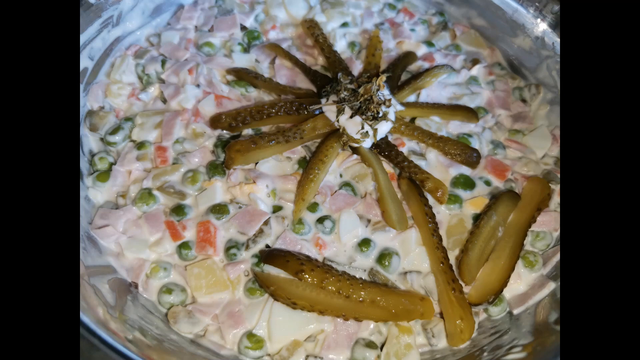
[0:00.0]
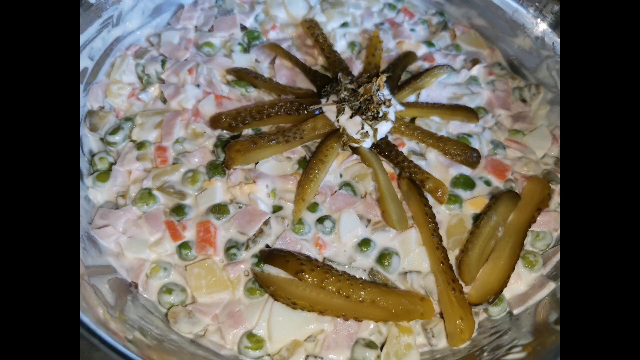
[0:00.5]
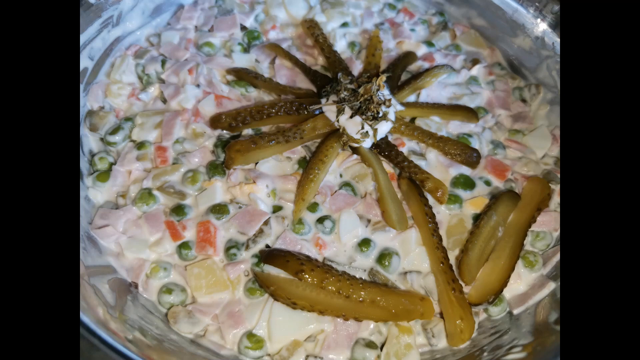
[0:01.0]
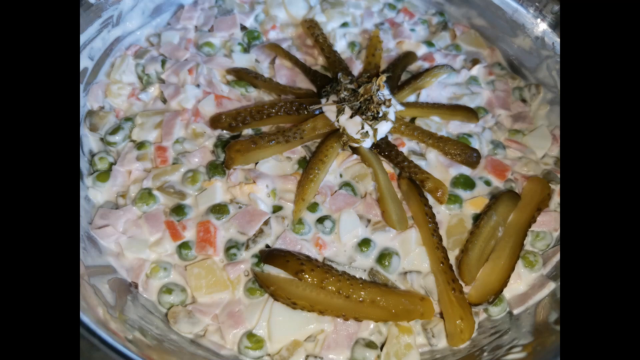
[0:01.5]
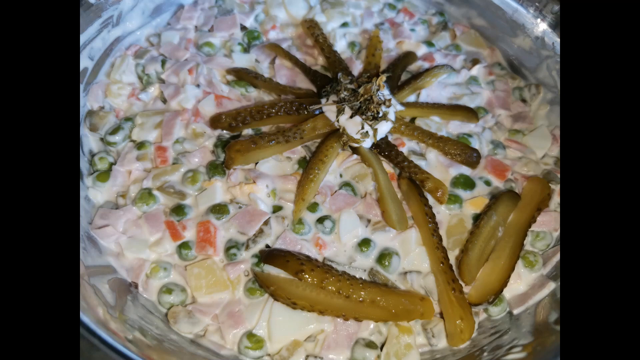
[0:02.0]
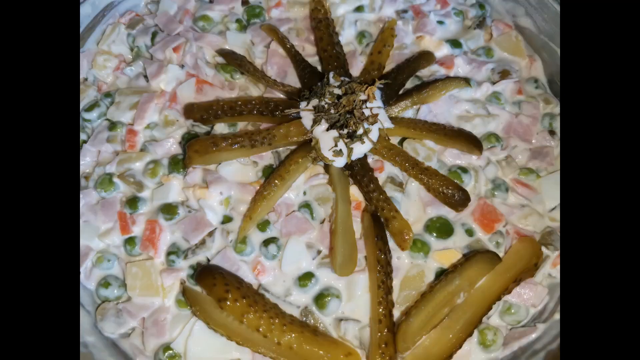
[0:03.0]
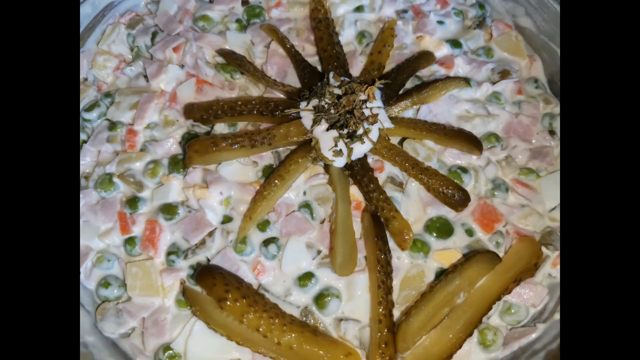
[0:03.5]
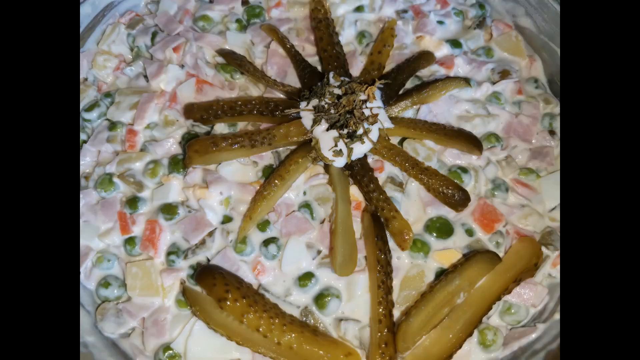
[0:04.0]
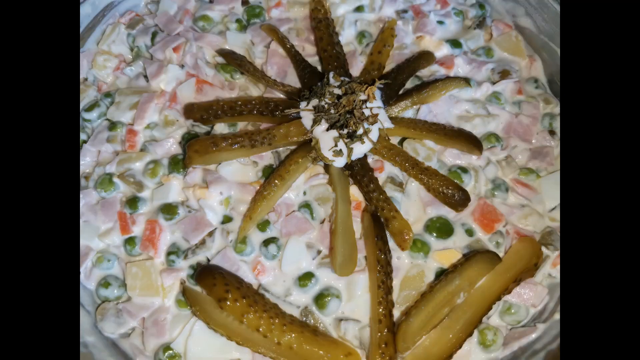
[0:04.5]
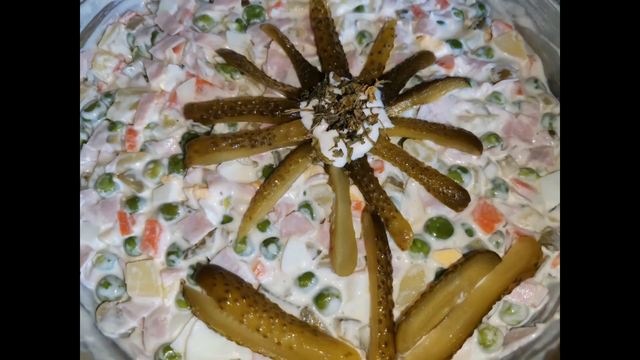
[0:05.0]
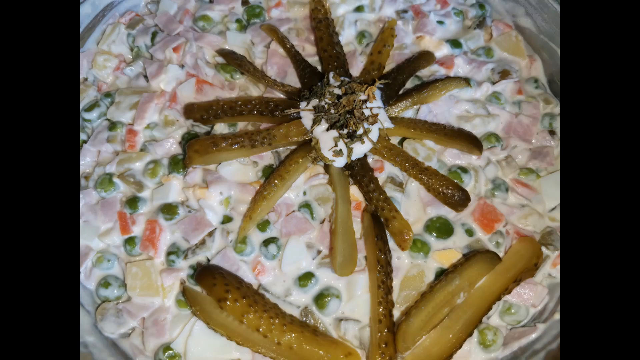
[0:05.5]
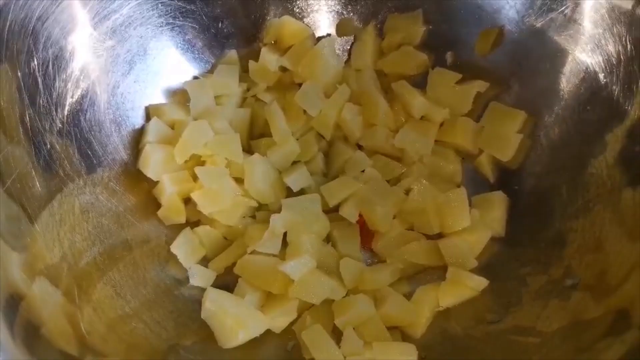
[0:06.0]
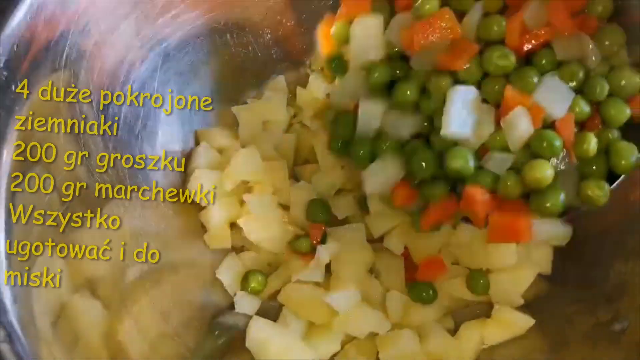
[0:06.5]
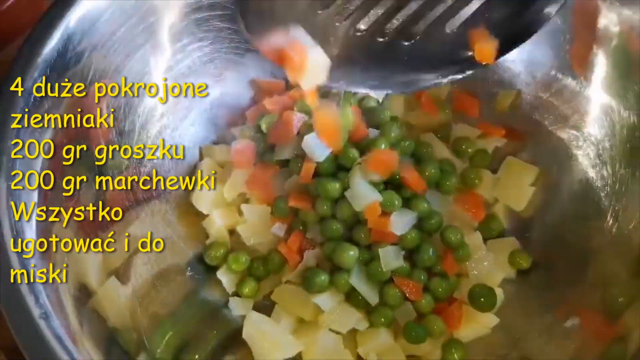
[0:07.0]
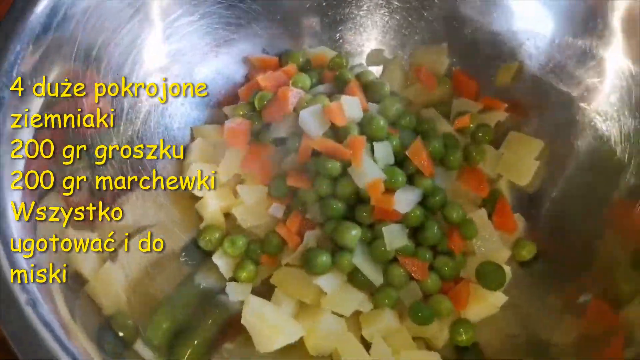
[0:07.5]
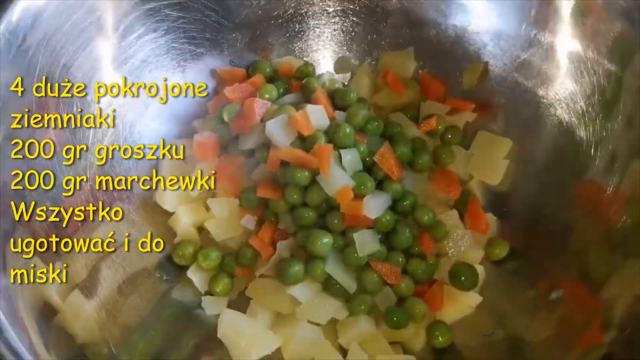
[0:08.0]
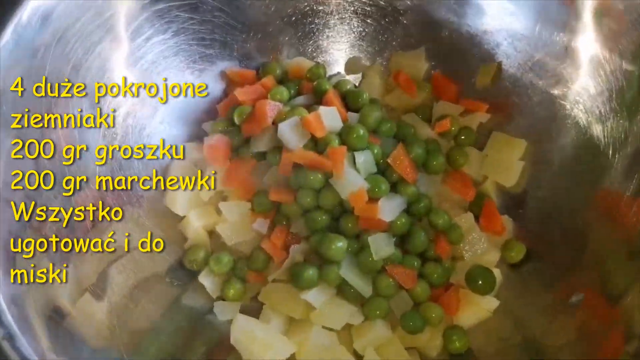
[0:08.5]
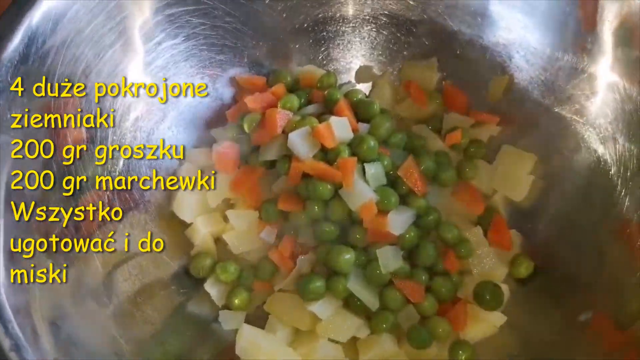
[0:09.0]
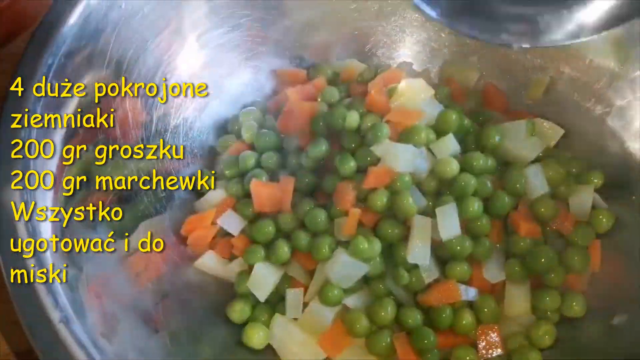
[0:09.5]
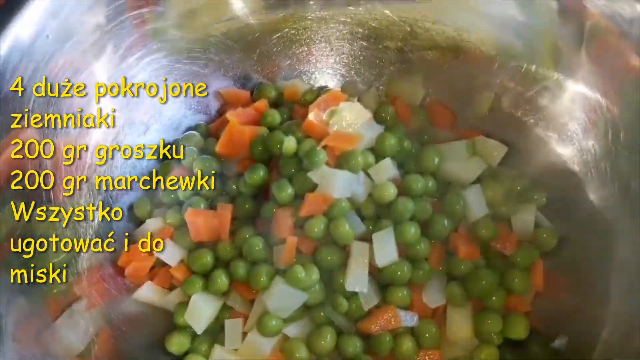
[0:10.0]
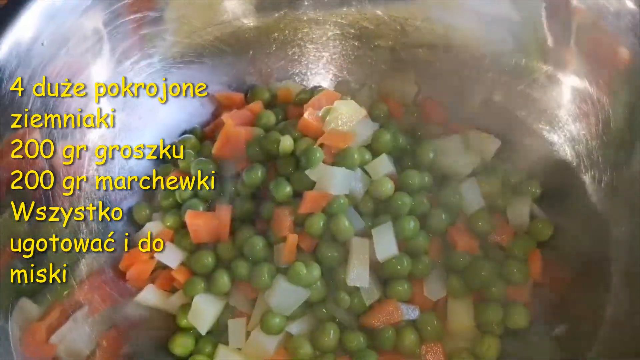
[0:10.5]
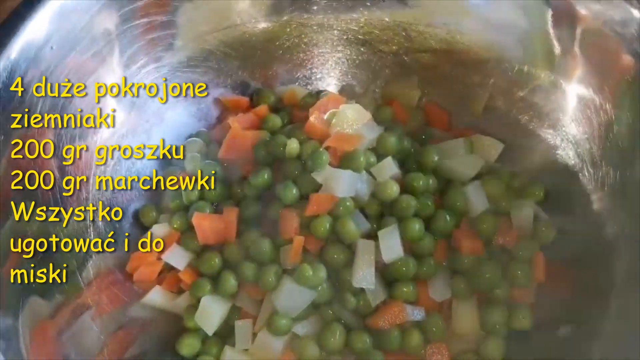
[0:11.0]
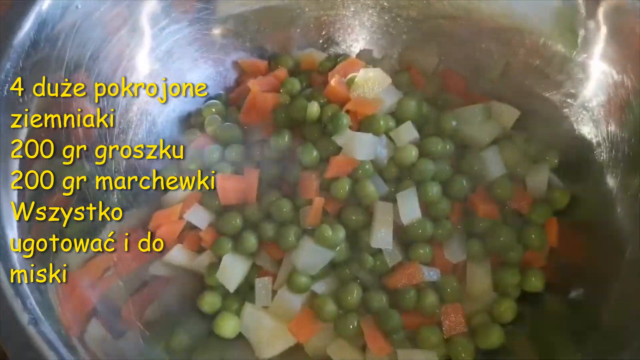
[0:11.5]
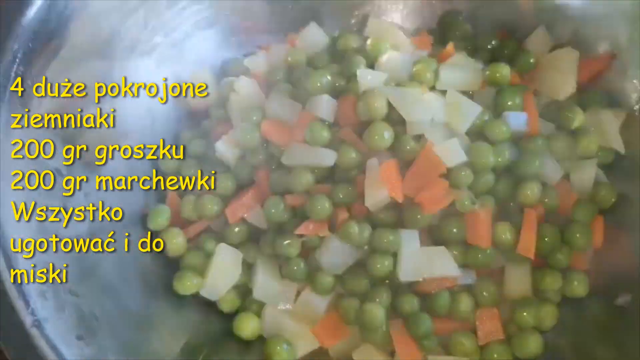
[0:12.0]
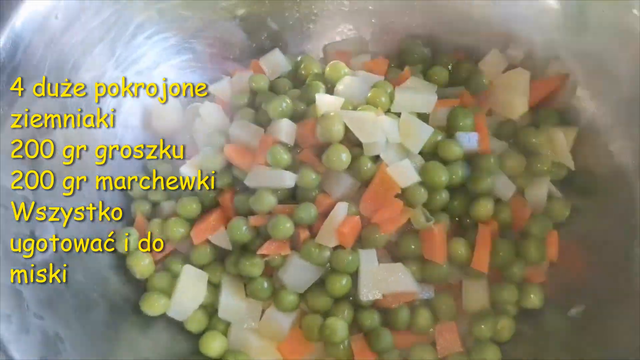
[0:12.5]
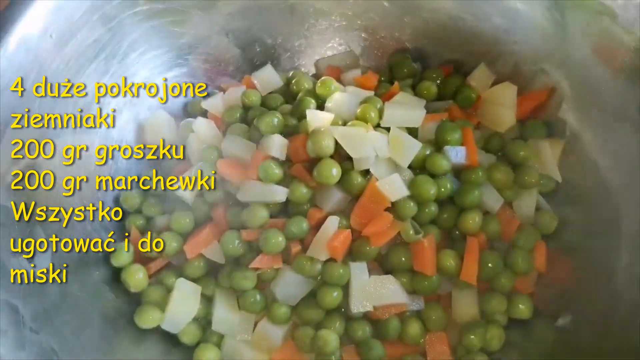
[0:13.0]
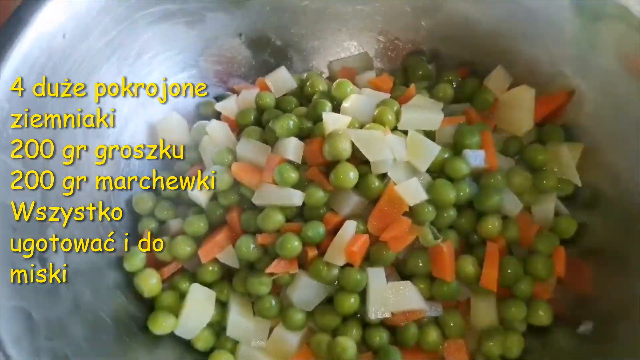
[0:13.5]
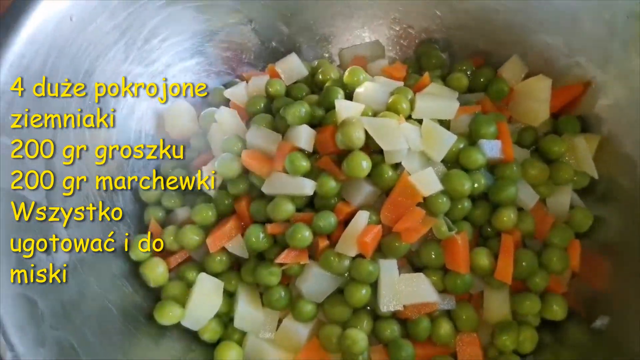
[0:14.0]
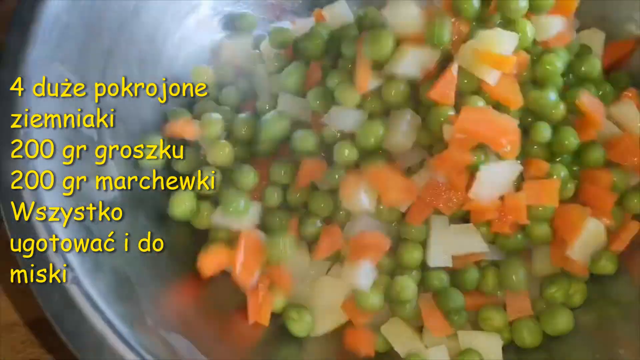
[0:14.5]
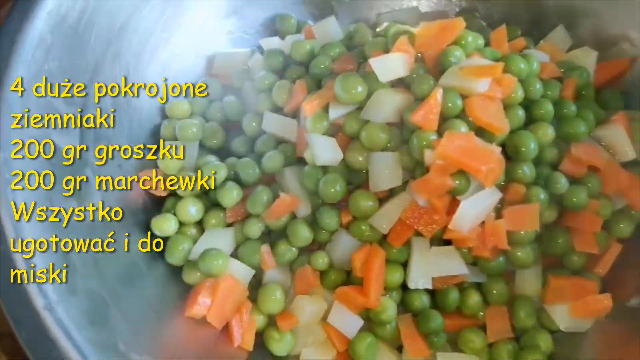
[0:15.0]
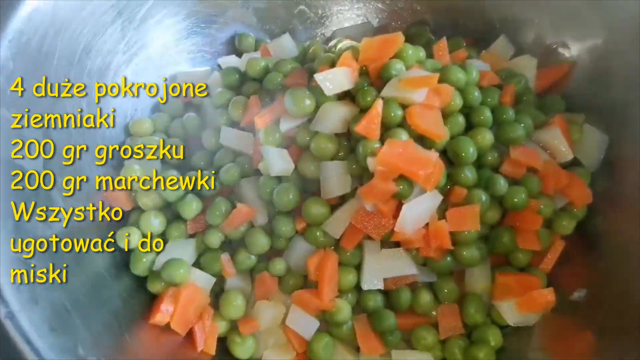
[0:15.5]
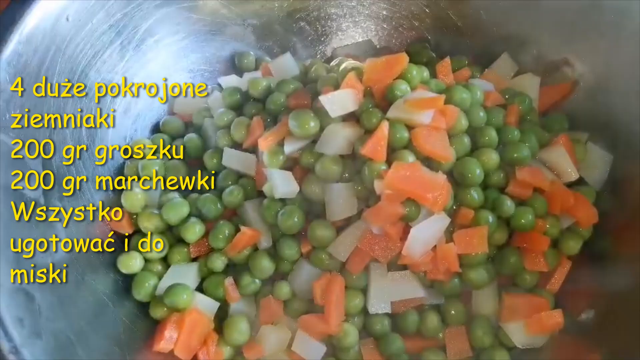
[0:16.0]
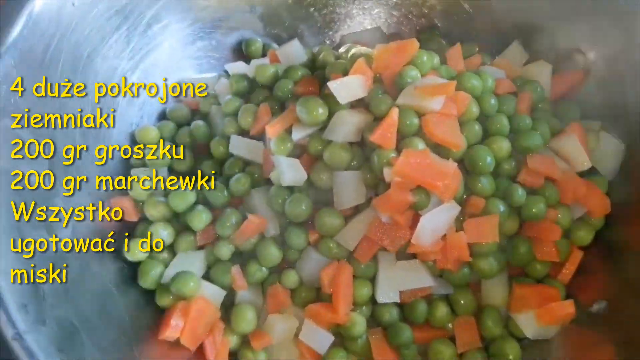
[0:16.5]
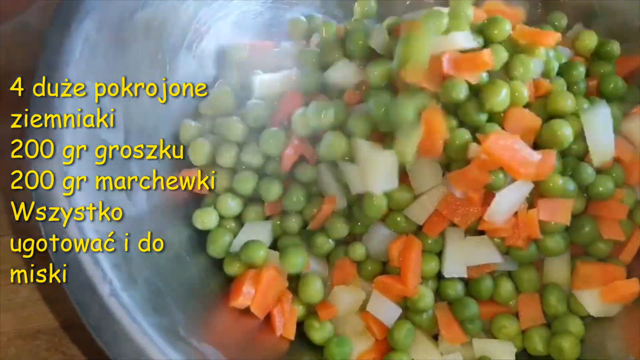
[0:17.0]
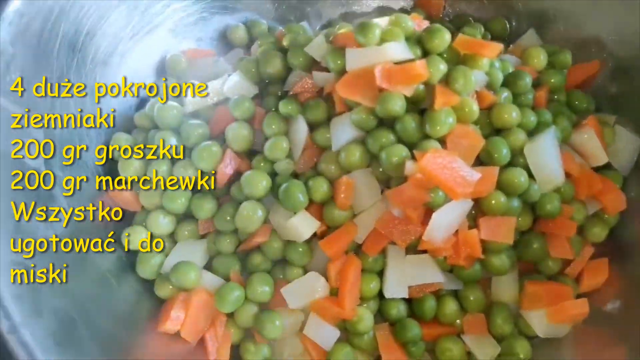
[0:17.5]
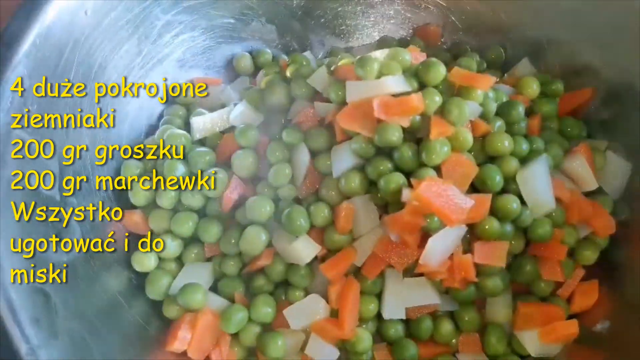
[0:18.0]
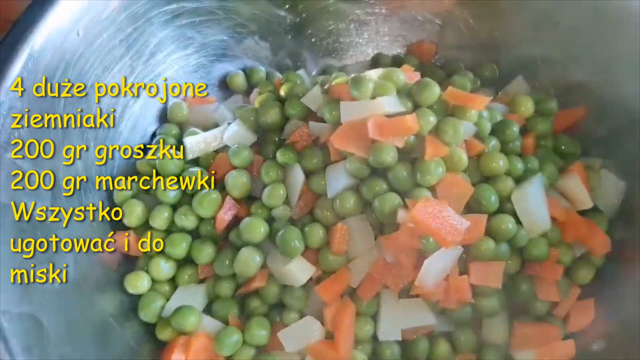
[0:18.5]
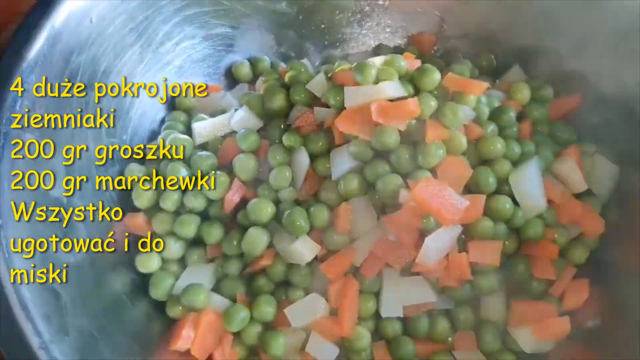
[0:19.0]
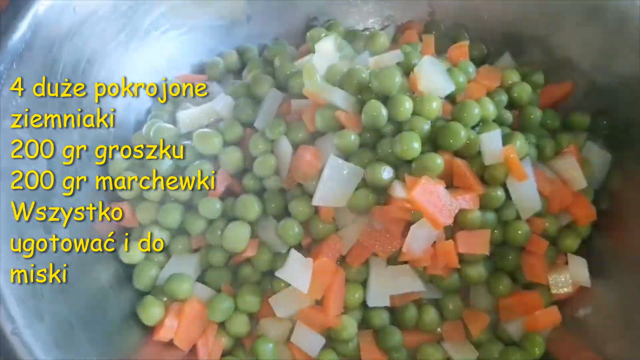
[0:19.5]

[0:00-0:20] What looks like some sort of summer salad is being made. It appears to consist of green peas, cubed potatoes, cubed carrots and cubed onions, which appear to have been boiled or cooked in some way. The vegetables are dumped into a stainless steel bowl. They are steaming hot, and it looks like a large serving spoon is used to place them into the large metallic bowl. Next, there appears to be some sort of salad dressing or mayonnaise combined with the ingredients. The dish looks like it is topped with pickle spears that form a flower, including the stem and the leaves, with what looks like a dollop of sour cream in the middle of the pickles and some herbs sprinkled on top.